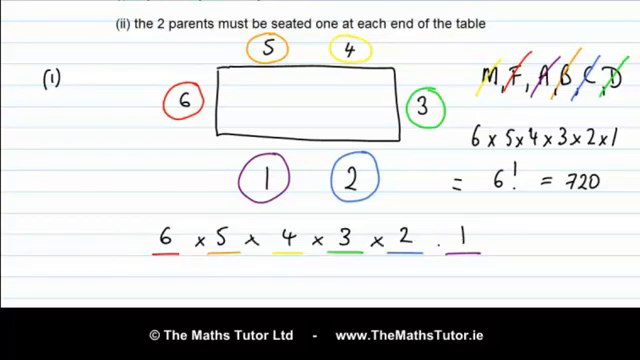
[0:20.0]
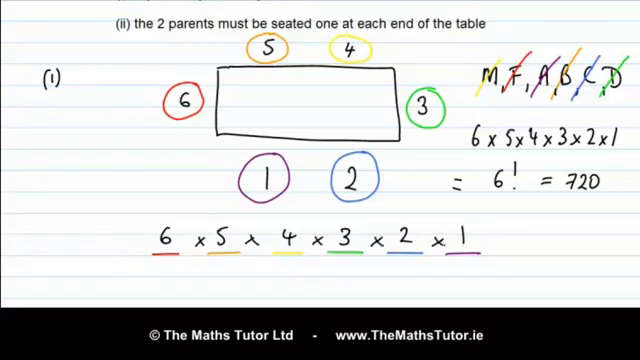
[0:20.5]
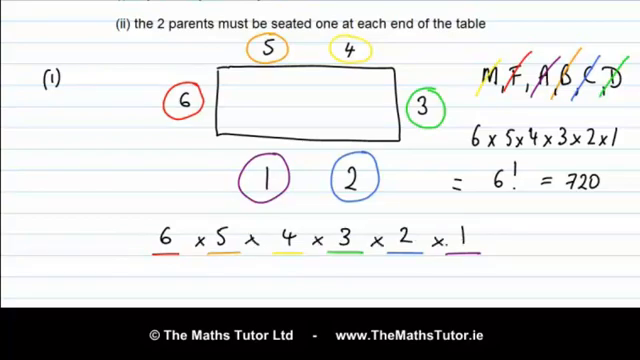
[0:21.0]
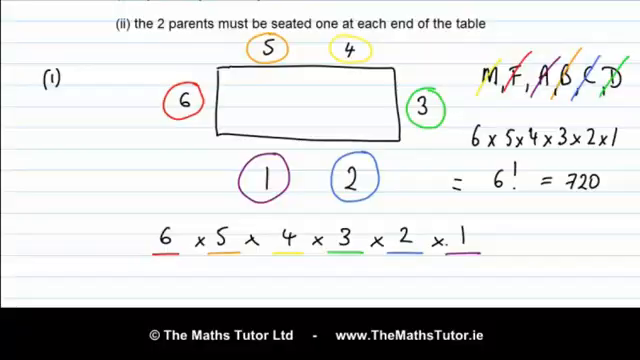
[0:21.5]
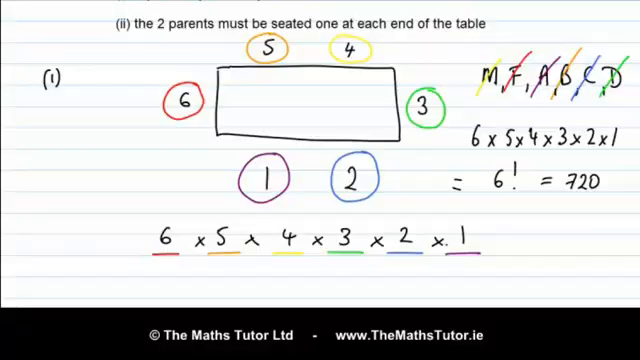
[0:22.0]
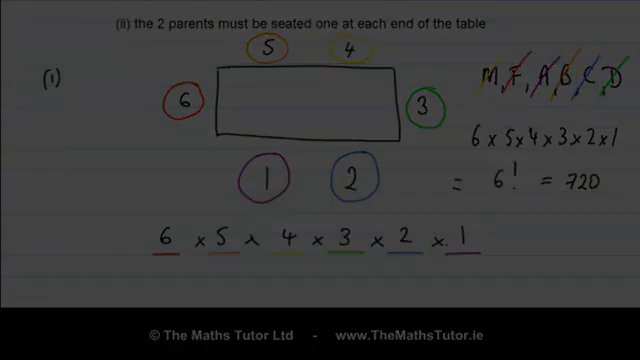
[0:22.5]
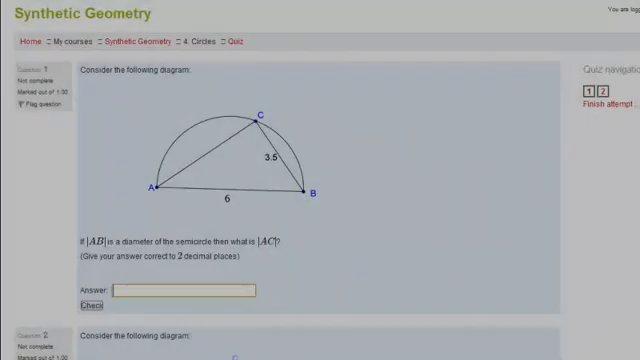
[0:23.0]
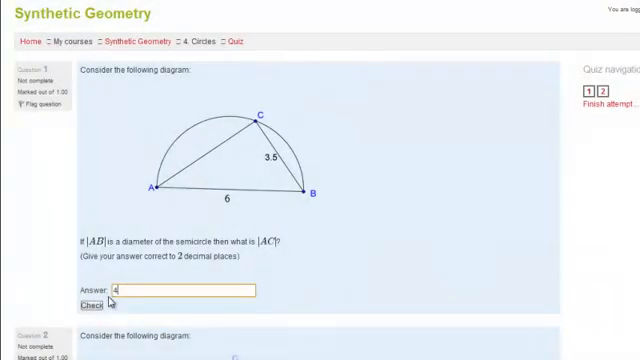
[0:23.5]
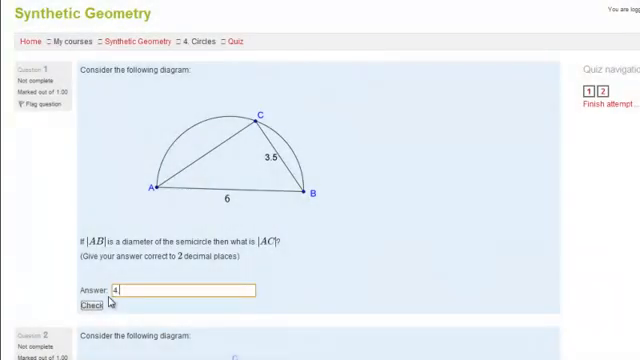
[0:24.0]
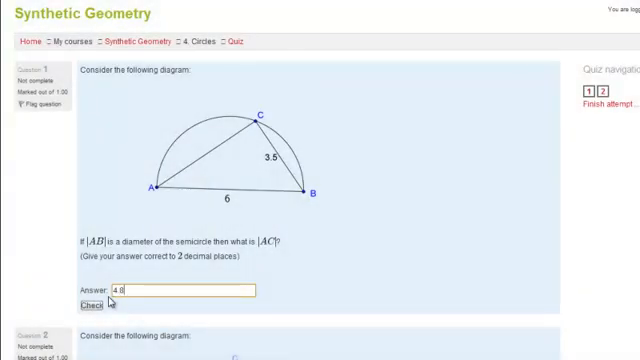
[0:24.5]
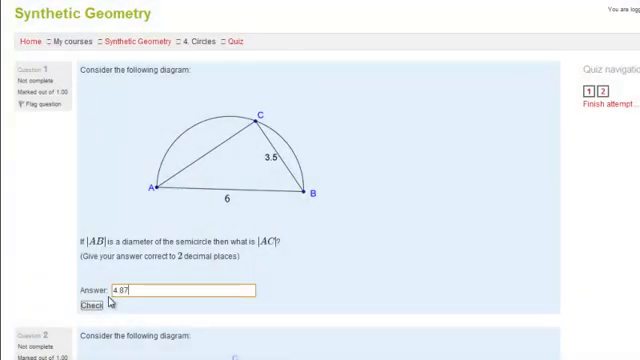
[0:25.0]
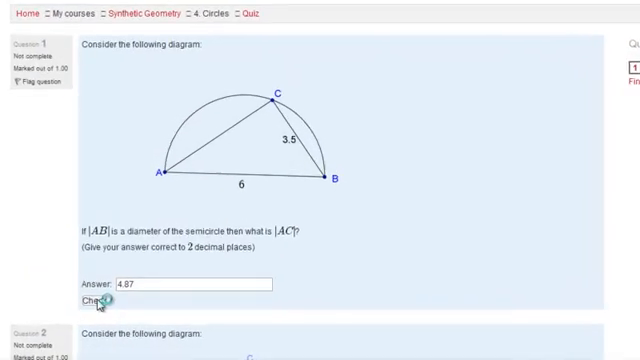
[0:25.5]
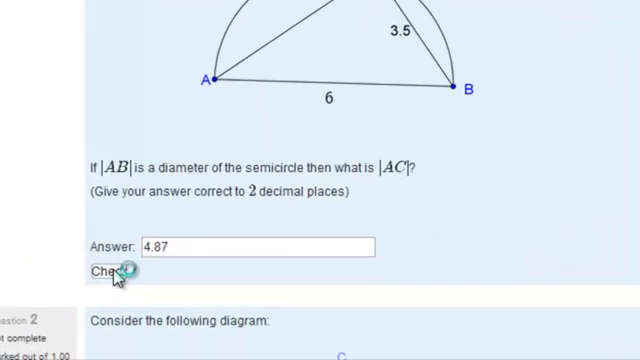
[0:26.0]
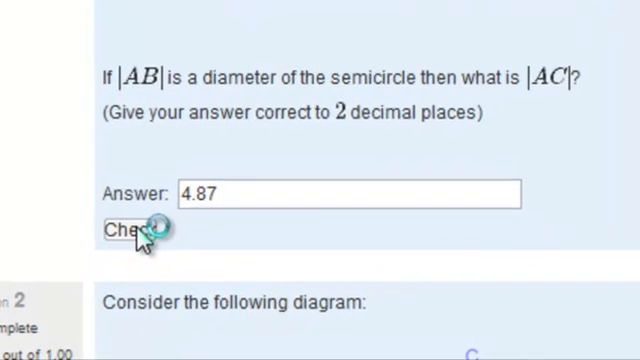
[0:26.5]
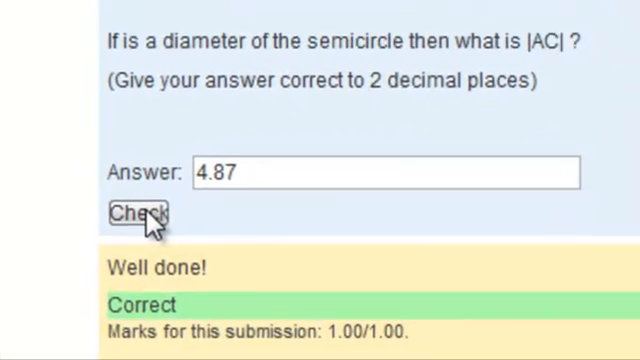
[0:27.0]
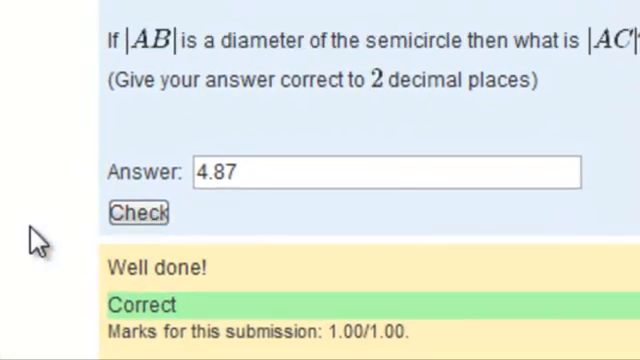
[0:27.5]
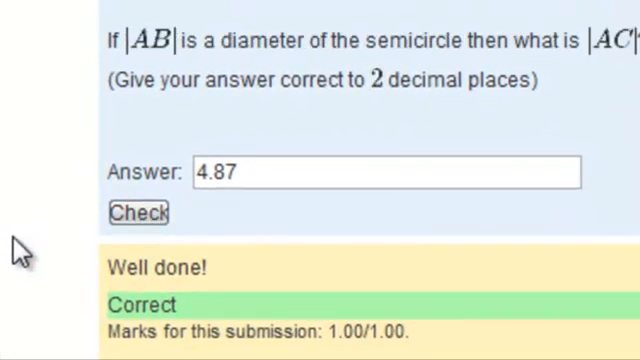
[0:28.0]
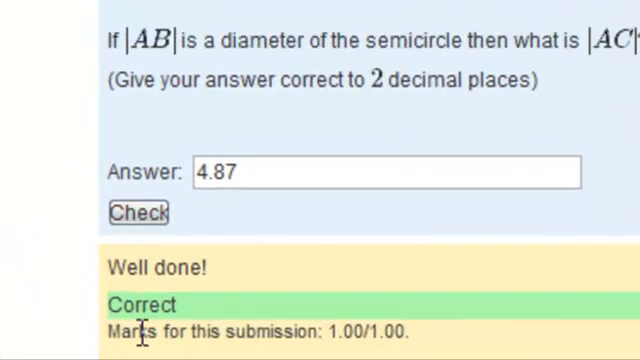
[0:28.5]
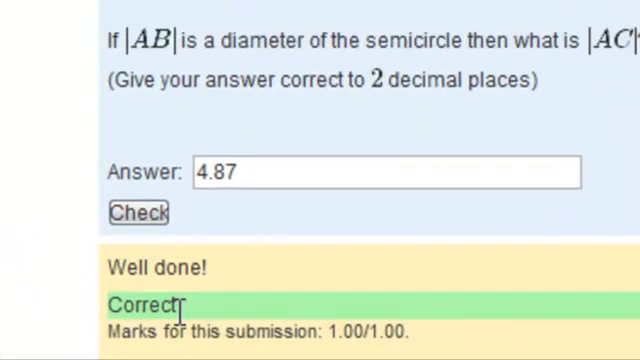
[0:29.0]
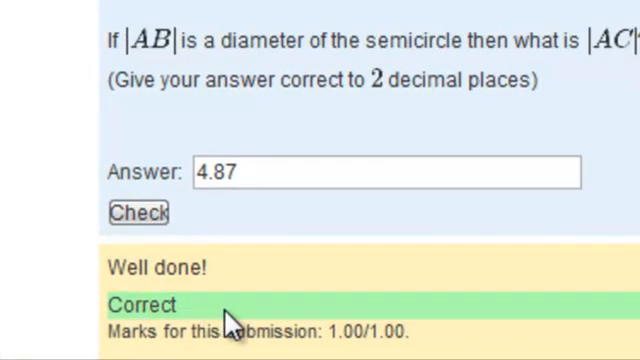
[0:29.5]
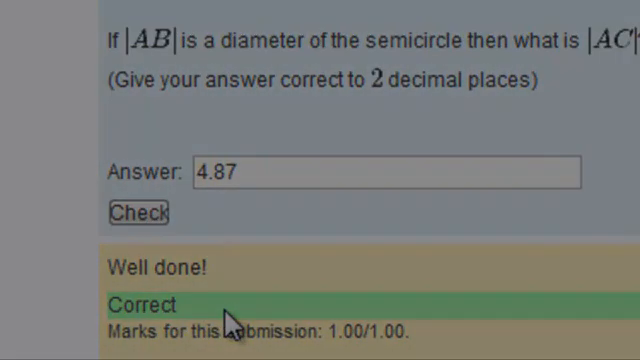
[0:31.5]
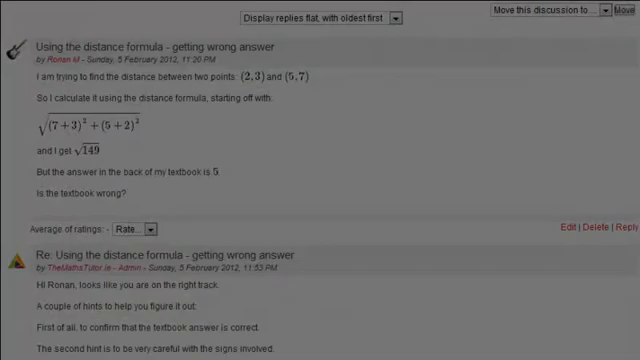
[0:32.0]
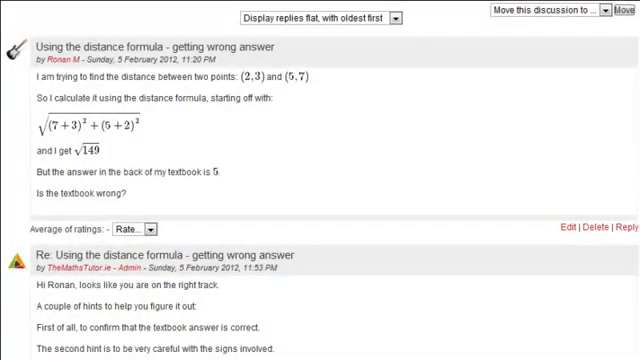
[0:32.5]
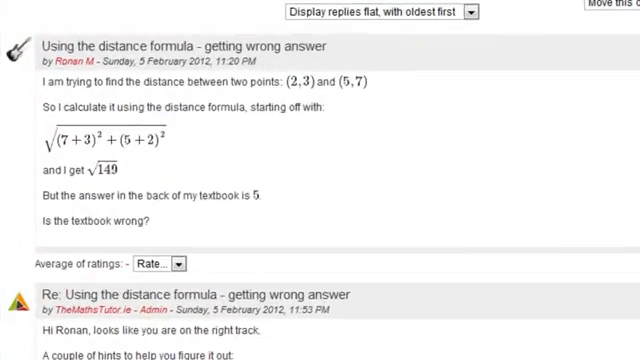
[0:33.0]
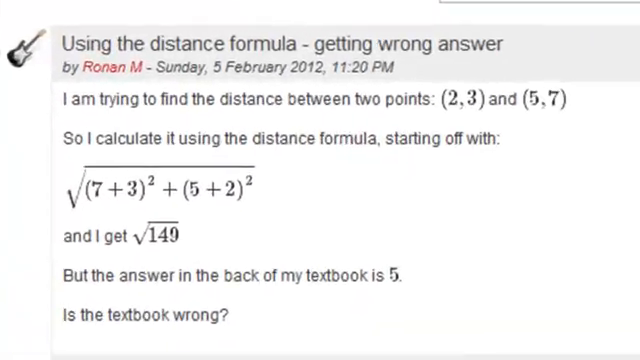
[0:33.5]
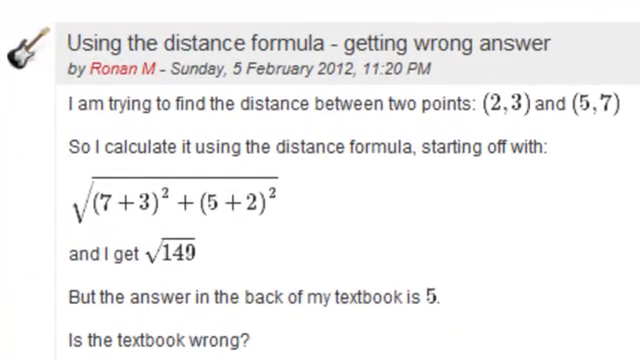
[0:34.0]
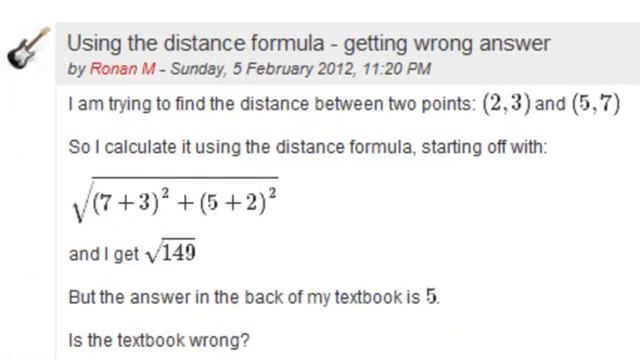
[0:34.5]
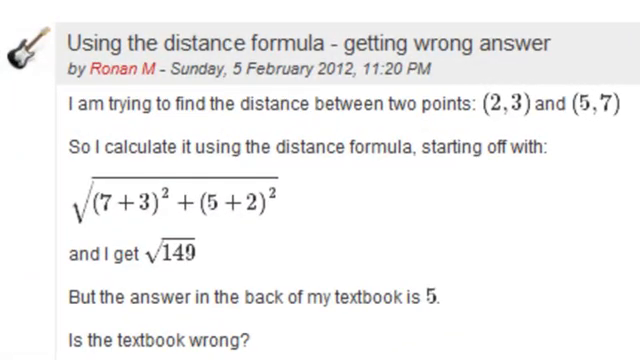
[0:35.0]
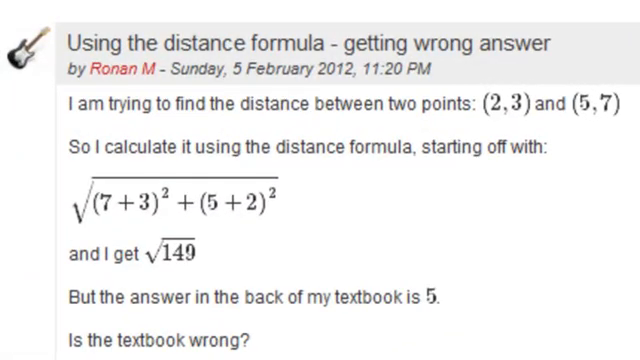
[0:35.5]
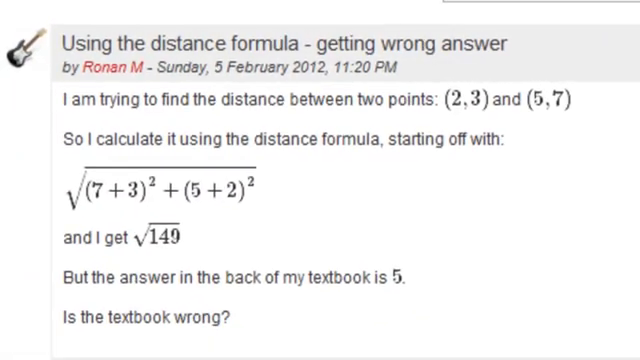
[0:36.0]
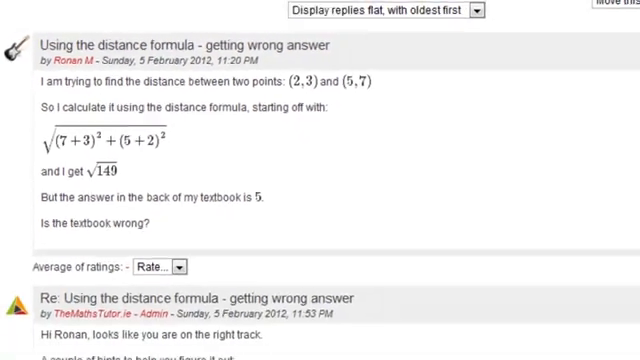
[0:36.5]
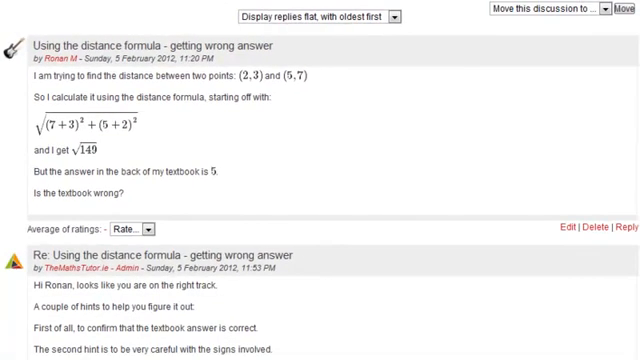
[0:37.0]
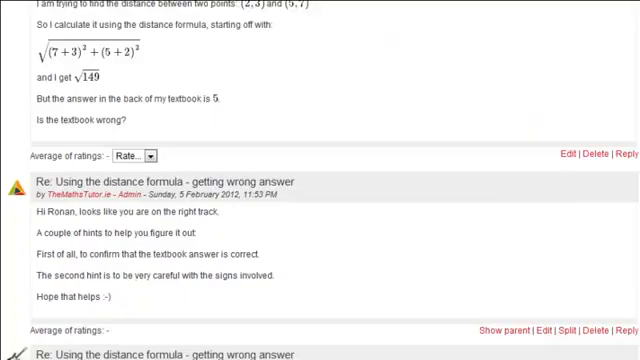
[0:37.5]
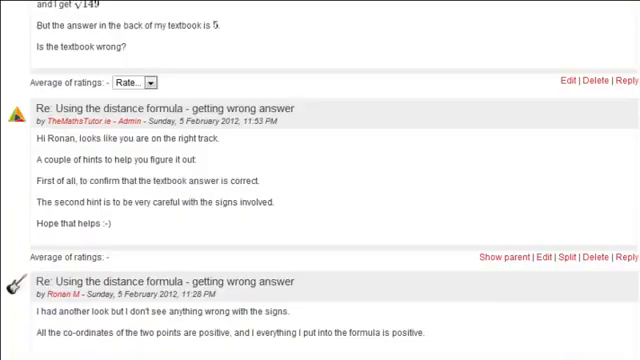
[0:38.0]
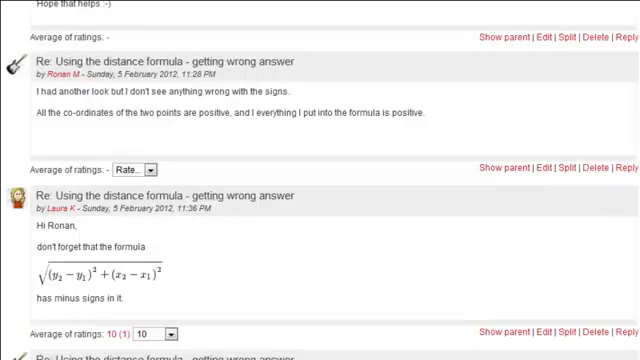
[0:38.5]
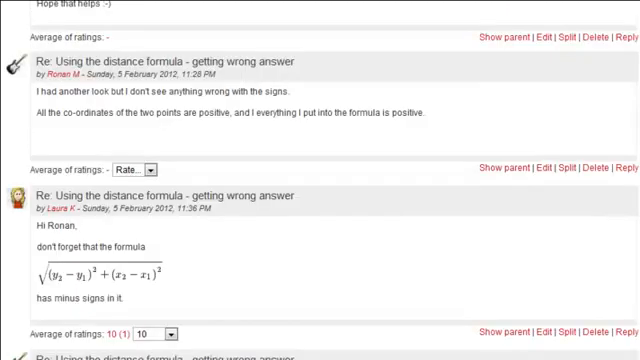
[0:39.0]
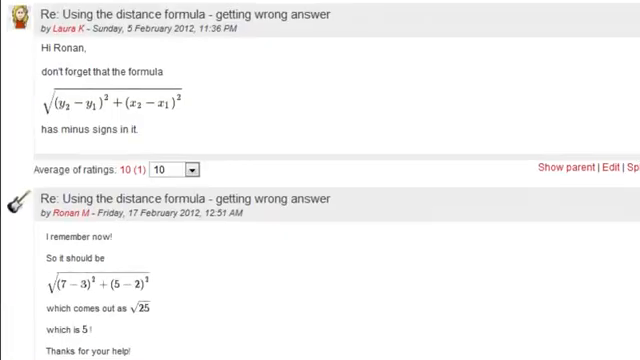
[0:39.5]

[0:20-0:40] Multiplication signs are written between the numbers so that they read 6 x 5 x 4 x 3 x 2 x 1. The video then shifts to another screen that says "question 1," with "consider the following diagram" written at the top. The diagram shows a semicircle with a triangle drawn inside it, with points A, B and C. Points A and B are annotated with a 6, and points B and C have a line annotated with 3.5. Below the diagram a question says "if AB is the diameter of the semicircle then what is AC," with the answer to be given to two decimal places, and there is a box below for typing the answer. The camera zooms in on the answer. 4.87 is written as the answer, the check button is hit, and a confirmation shows that the answer is correct, with a "well done." The video then moves on to another question titled "using the distance formula, getting wrong answer," which looks like it is from someone named Ronan M on a Sunday in February 2012. The person is trying to find the distance between two points; they say they calculated it using the distance formula and got the square root of 149, but the answer at the back of their textbook is 5, so they ask whether the textbook is wrong.